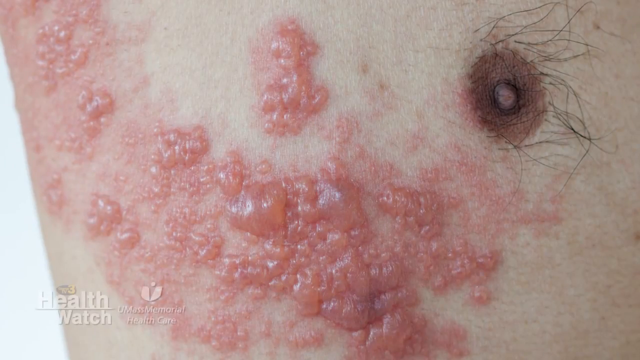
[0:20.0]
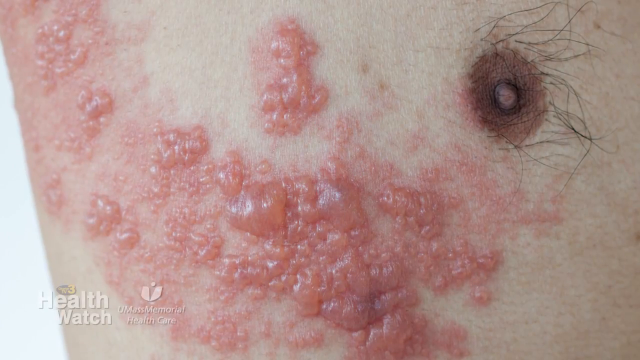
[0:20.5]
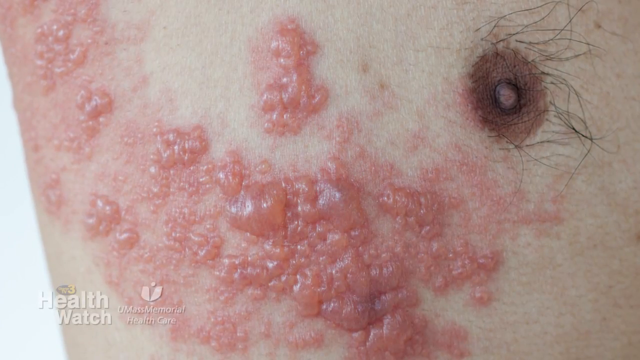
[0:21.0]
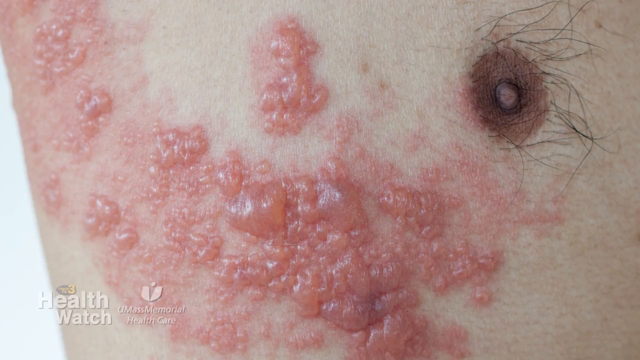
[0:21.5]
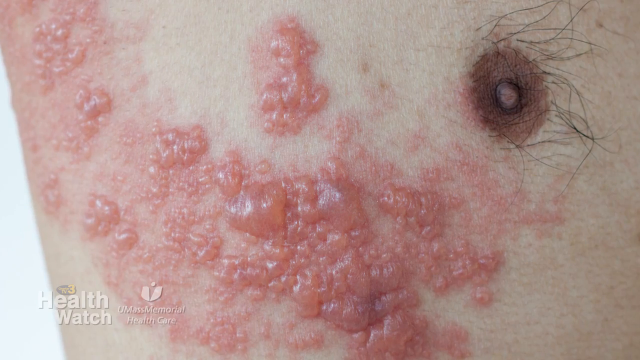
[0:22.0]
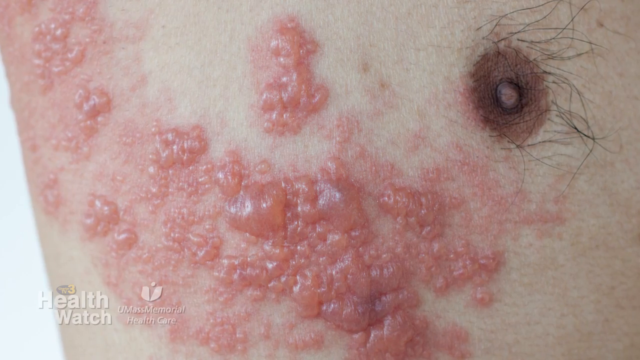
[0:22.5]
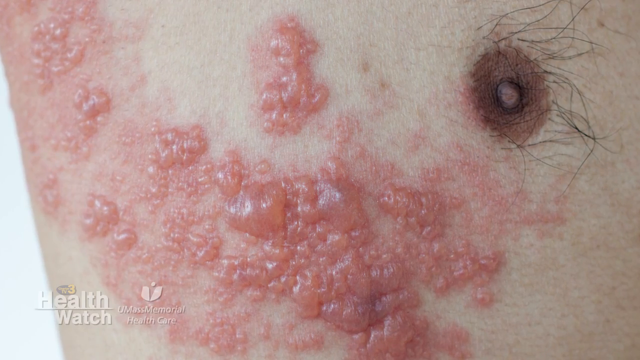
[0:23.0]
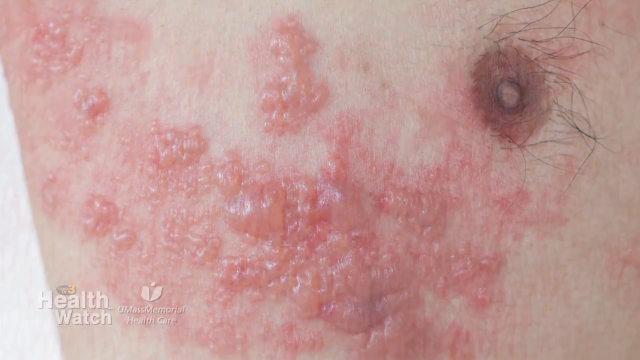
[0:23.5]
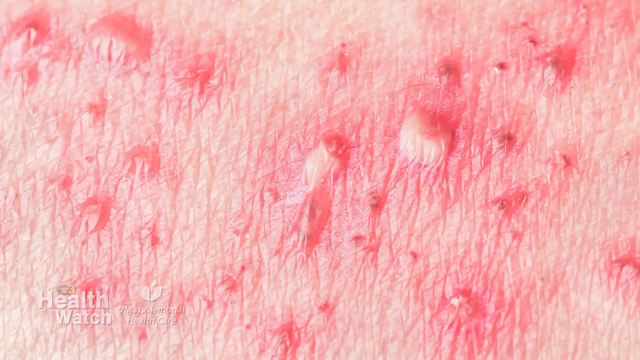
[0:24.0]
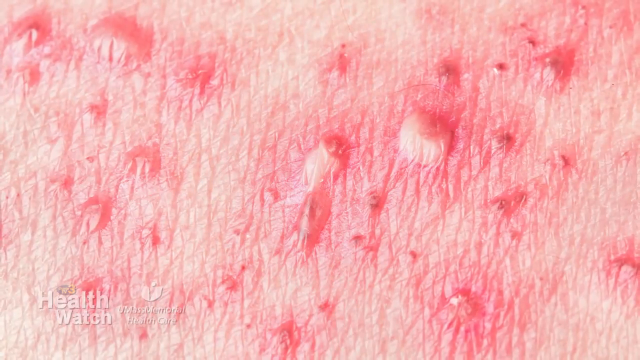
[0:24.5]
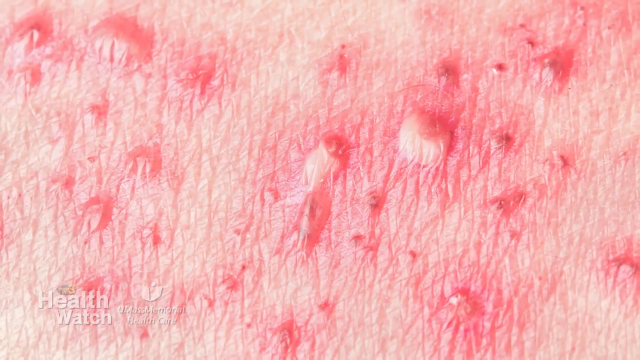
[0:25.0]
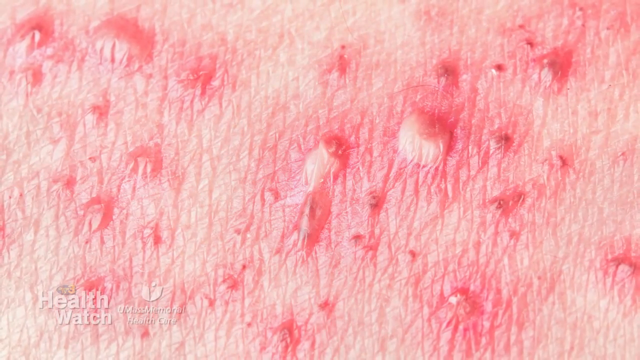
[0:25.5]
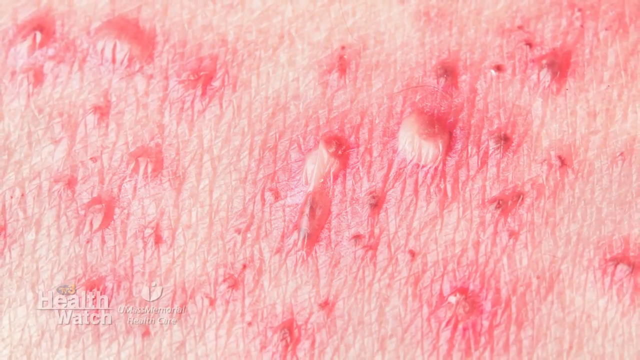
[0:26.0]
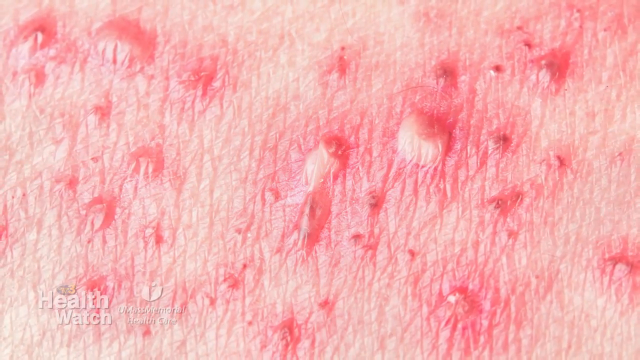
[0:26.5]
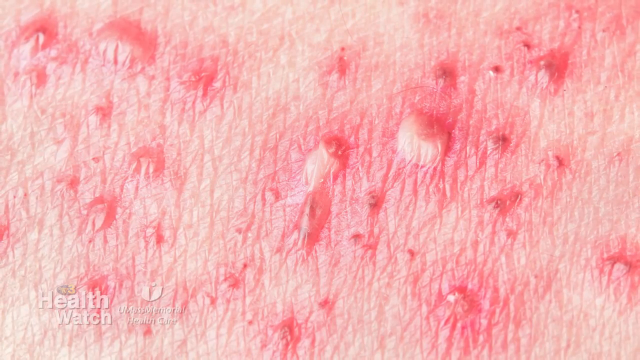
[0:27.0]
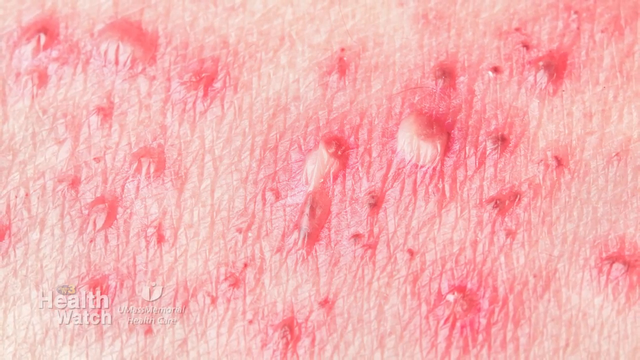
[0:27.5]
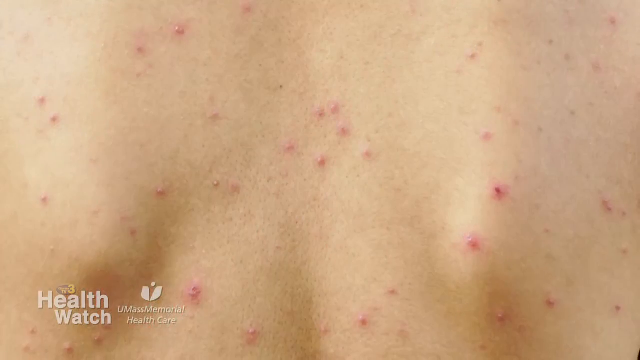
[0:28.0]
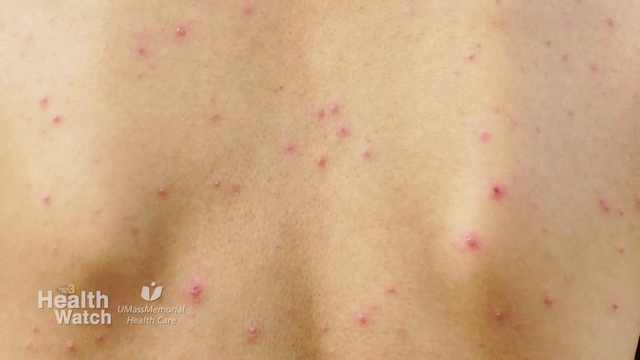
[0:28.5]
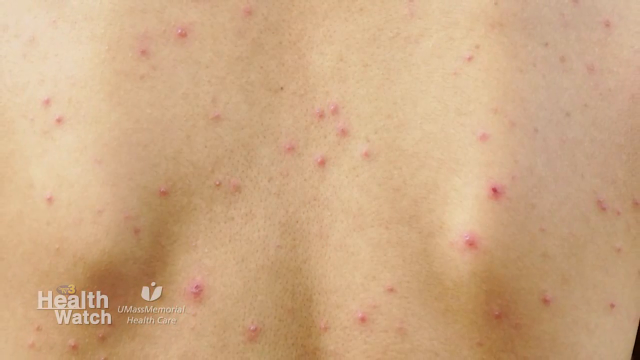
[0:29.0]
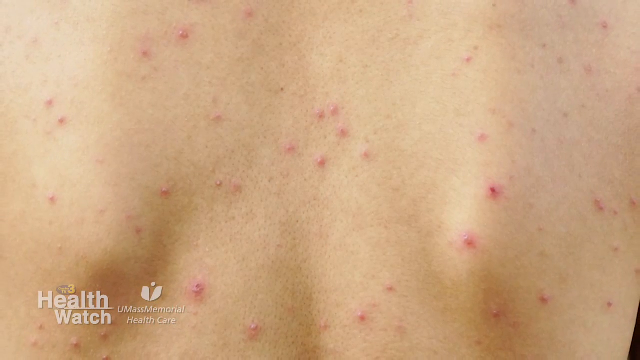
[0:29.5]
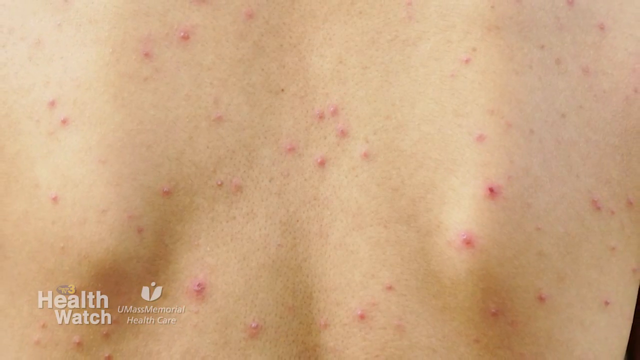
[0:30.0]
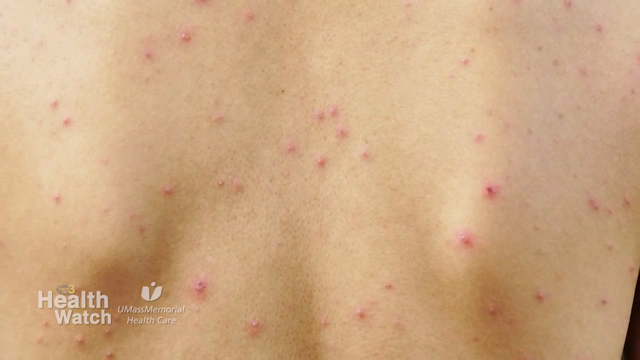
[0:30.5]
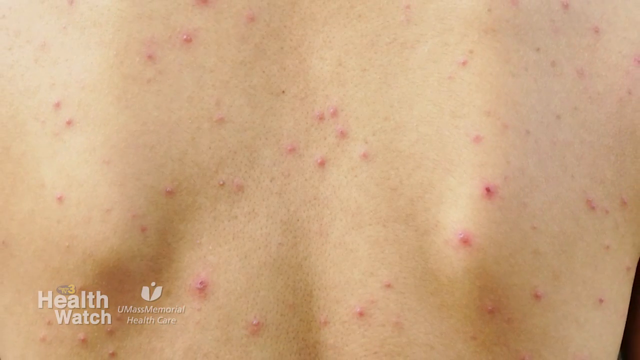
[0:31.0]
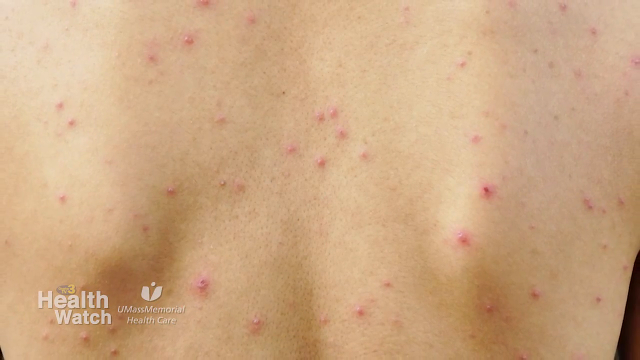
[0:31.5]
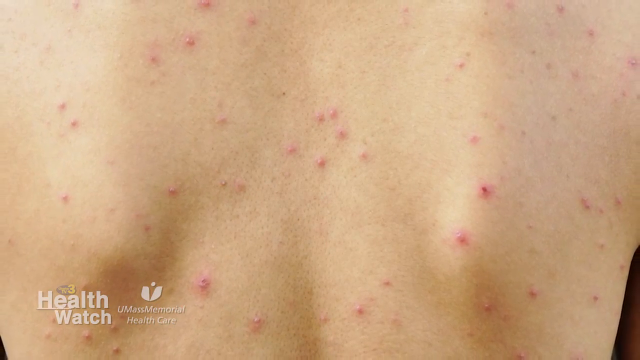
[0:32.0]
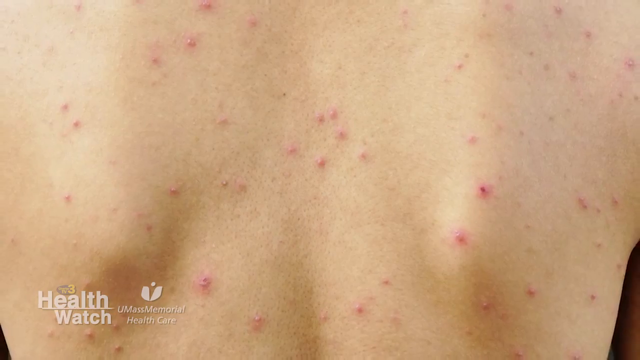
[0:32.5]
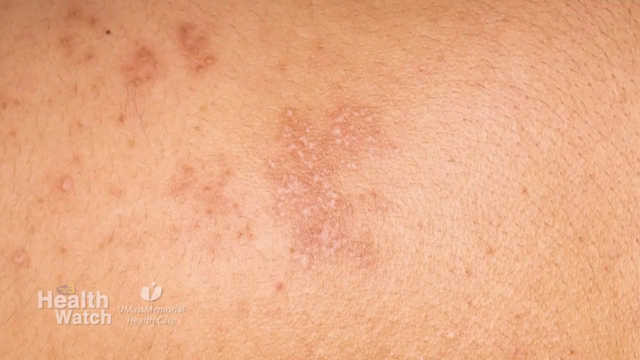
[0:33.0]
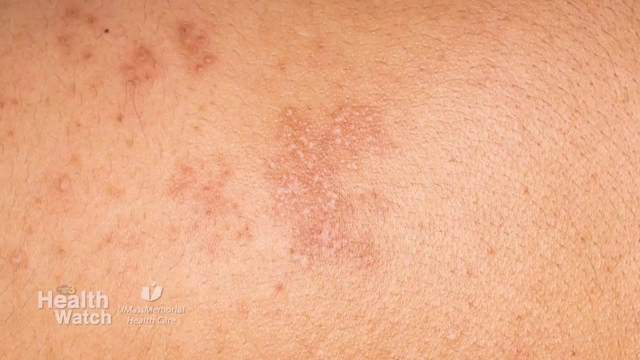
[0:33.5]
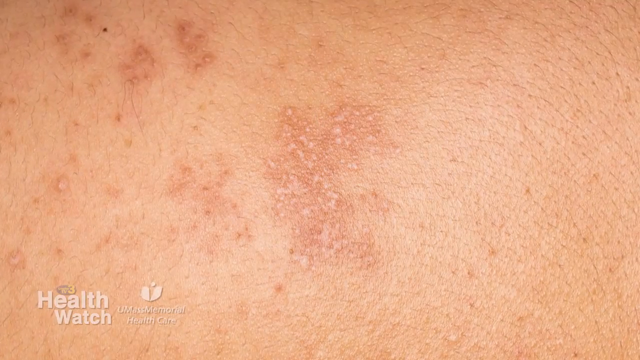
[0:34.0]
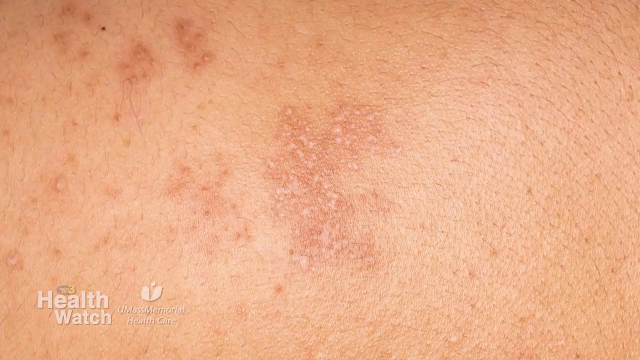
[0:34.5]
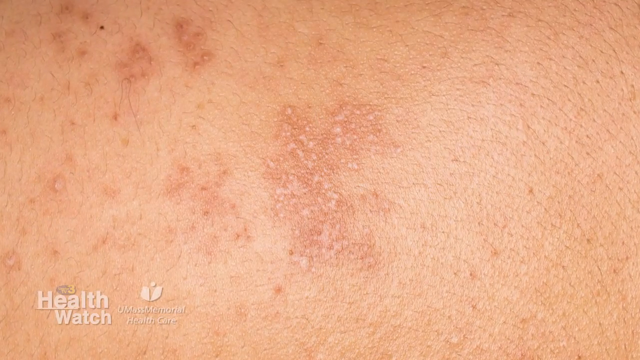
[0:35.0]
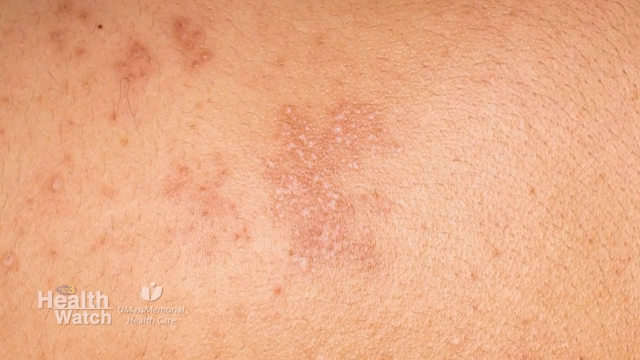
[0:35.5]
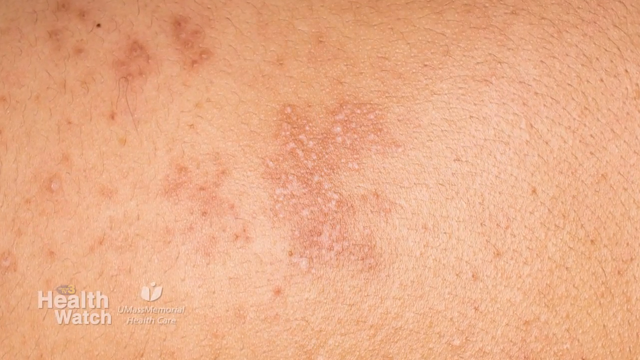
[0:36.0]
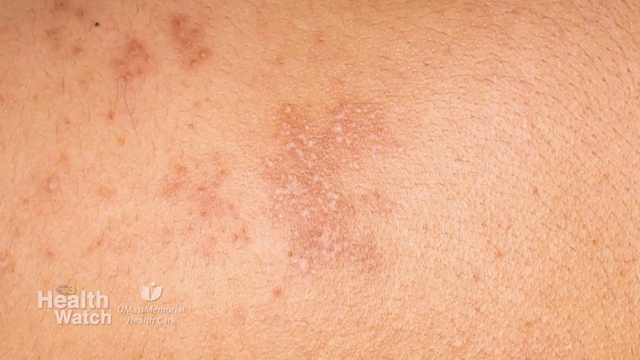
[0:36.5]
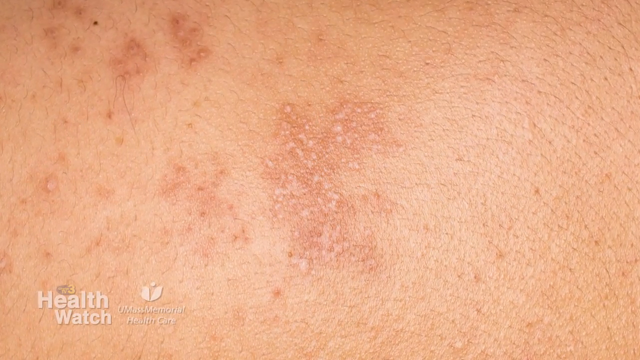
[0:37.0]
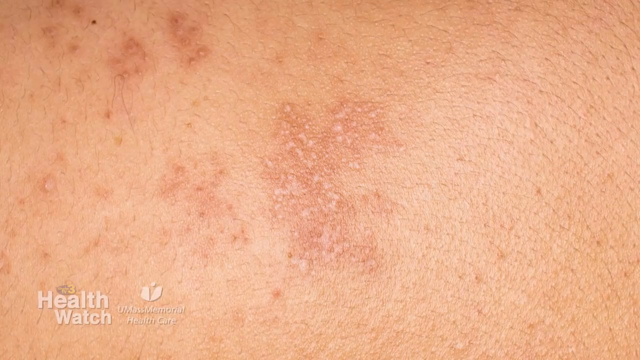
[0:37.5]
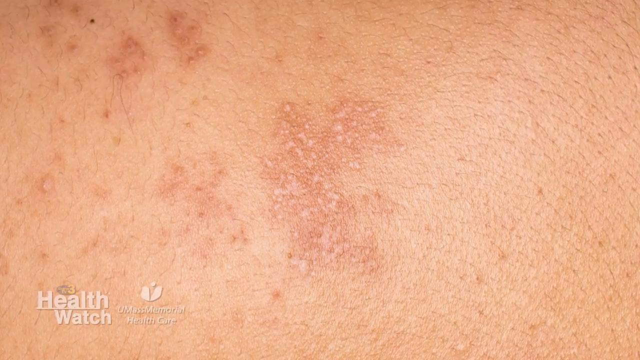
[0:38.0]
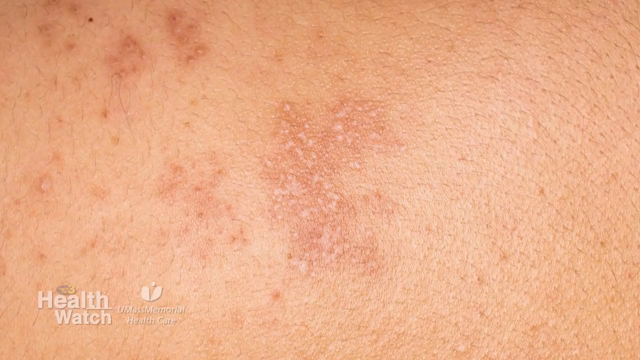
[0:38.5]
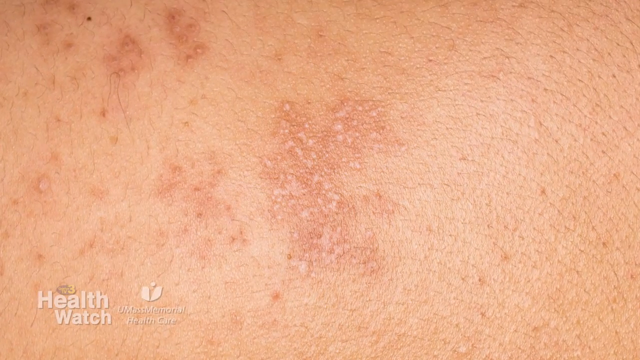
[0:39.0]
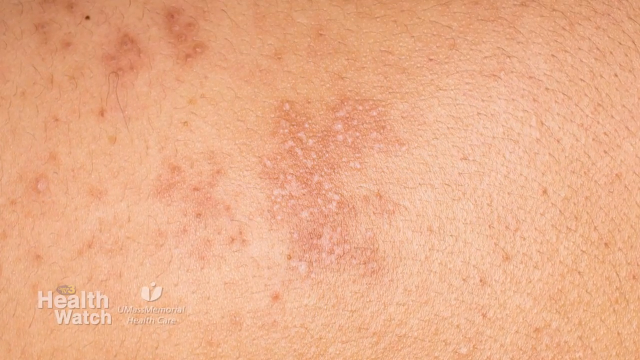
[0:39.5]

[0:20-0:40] An up-close picture shows a male's breast area with a pink bumpy rash next to a brown nipple with hair. The skin of this rash looks very thin, as if the bumps could be popped easily and fluid would come out, and the rash looks like it extends around the side of the chest and to the right under the armpit. Next is another pink rash up close, with many bumps and inflamed skin around it; it looks similar, but the bumps look a little less tight, though some still look like they could be popped, and the skin is more red. Another picture shows what looks like someone's back with multiple pink bumps scattered across it, looking more like acne than anything. After that comes another kind of rash, a little less red and darker, seemingly also on the back; it looks like a regular rash, and the person's skin complexion is a little darker.